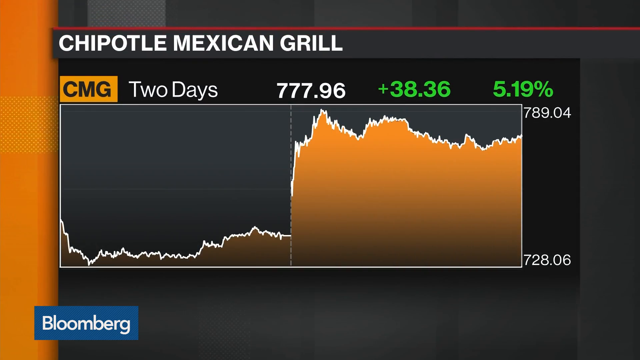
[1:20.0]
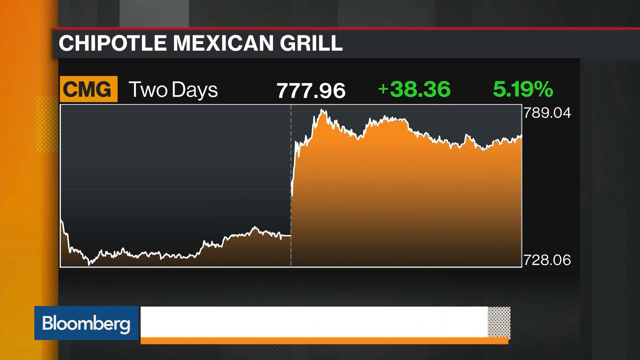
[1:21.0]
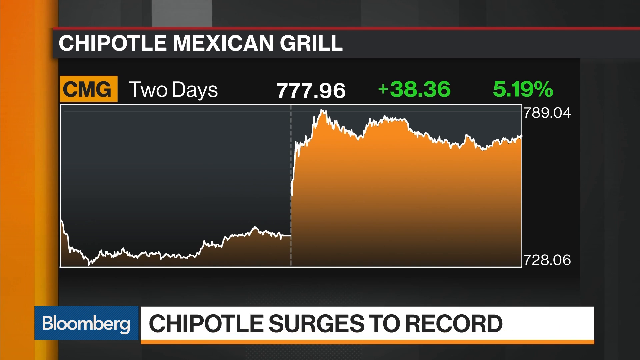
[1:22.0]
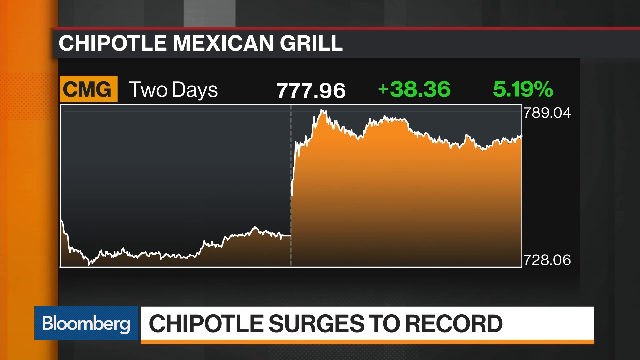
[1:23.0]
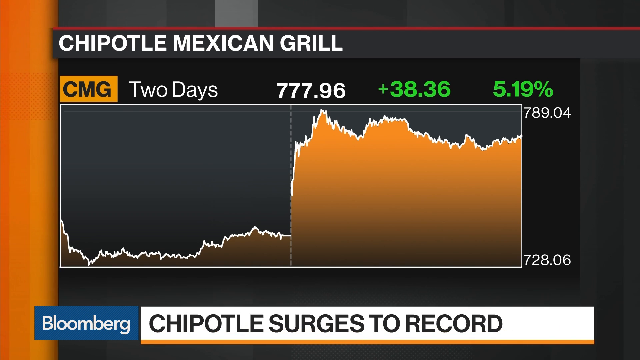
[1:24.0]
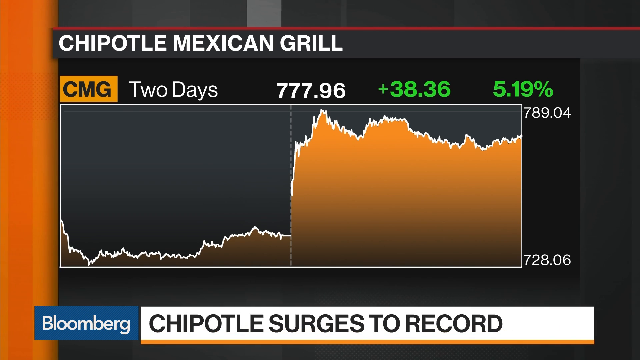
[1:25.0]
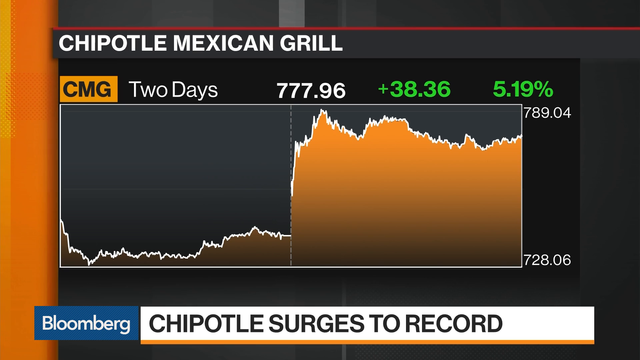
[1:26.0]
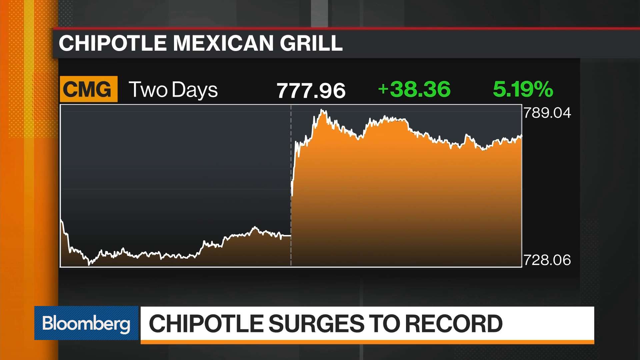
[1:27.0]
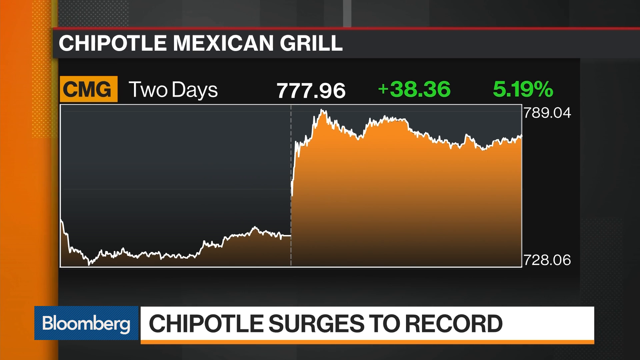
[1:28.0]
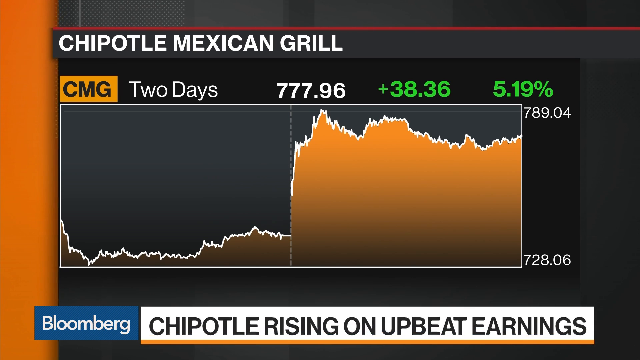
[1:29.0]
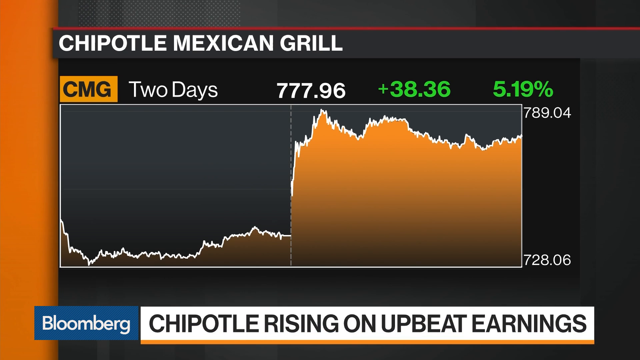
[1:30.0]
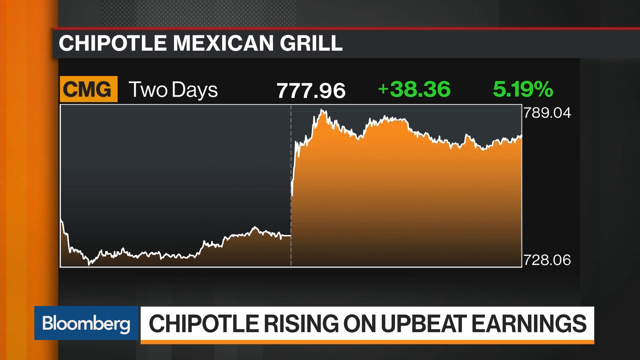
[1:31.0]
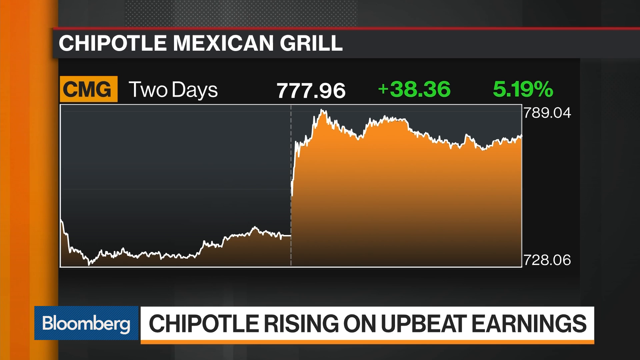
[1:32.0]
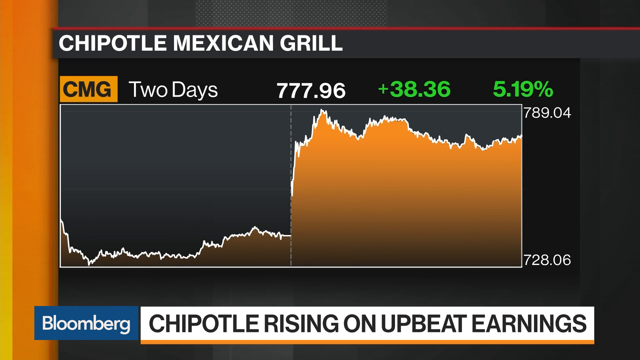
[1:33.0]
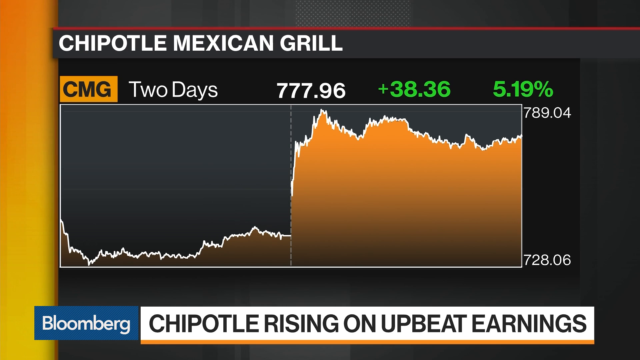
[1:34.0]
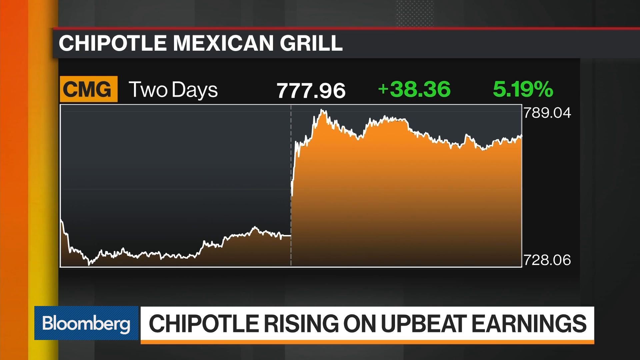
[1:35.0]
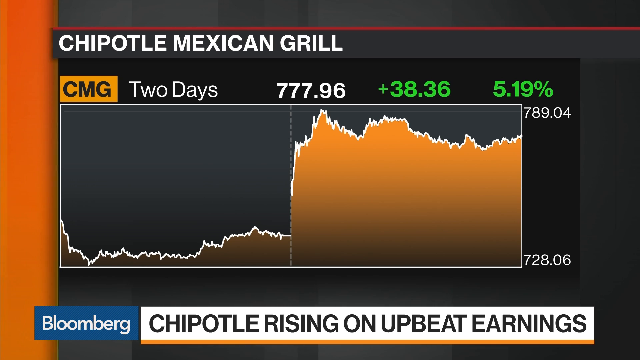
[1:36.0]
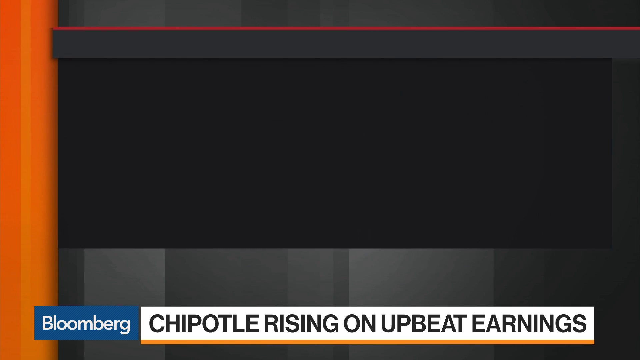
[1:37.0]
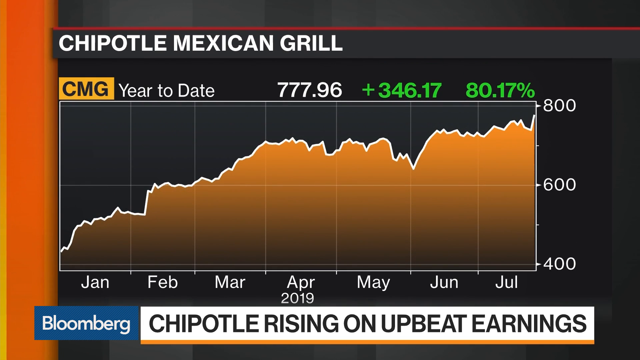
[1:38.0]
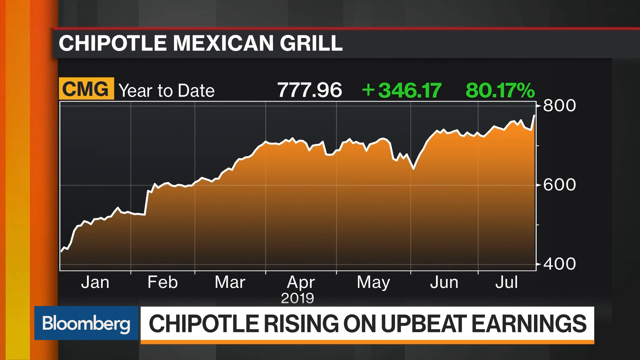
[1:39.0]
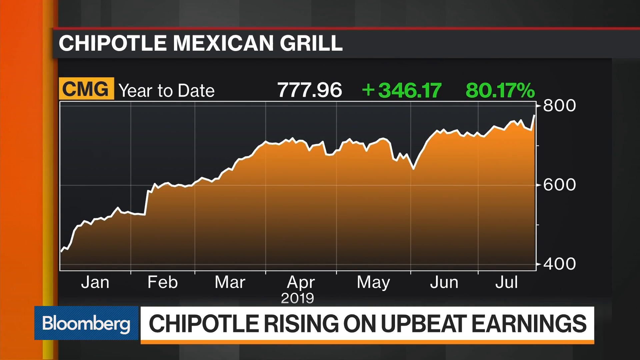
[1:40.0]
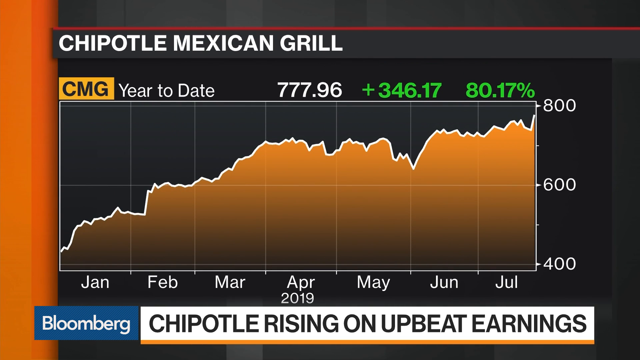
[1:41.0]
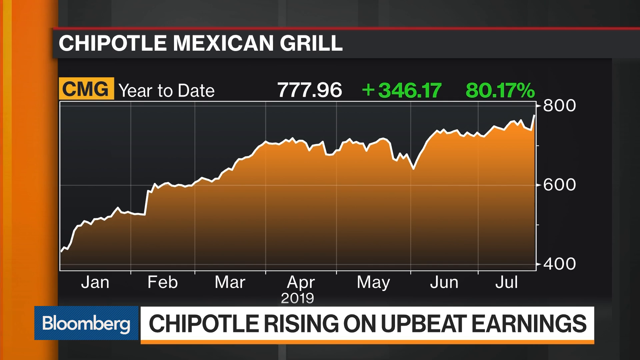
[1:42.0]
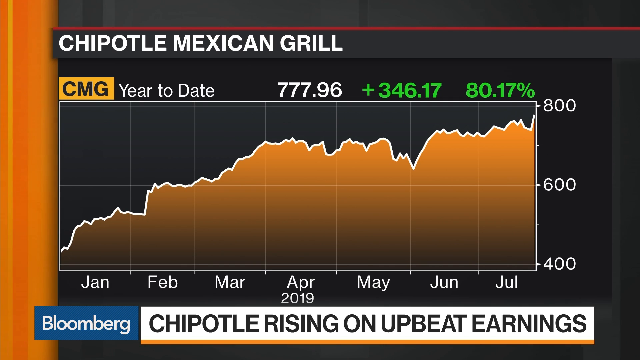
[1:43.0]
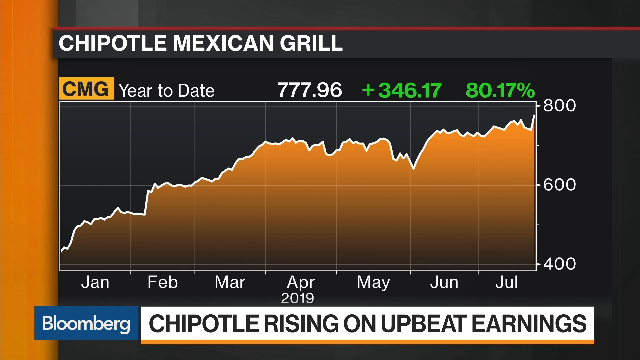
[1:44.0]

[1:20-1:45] A graphic about Chipotle Mexican Grill fills the frame. At the bottom of the screen, a white rectangle says "Chipotle rising on upbeat earnings." The graph spans seven or so months of 2019, starting in January and ending in July. The graphic has orange colorings, and the background of the graph is black. No people are visible; there is only the infographic. A red line runs across the top of the page, and below it is the header, in all white, that says "Chipotle Mexican Grill." To the left of the header is an orange bar about 2 inches wide going from the top to the bottom, though it doesn't take up the entire screen. Most of the screen background is black.